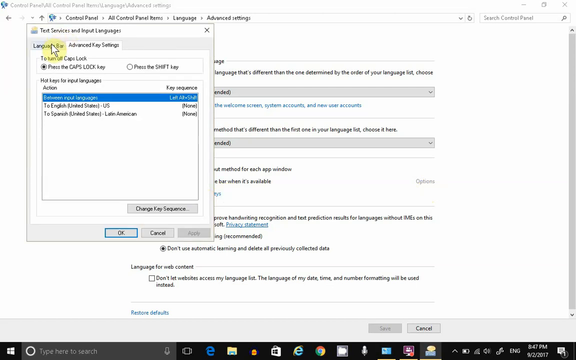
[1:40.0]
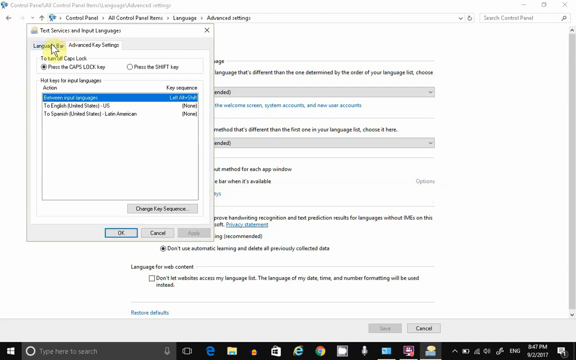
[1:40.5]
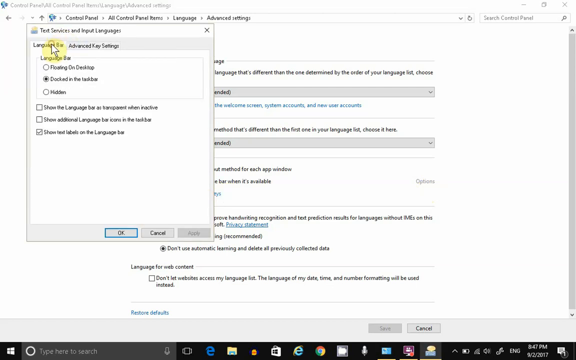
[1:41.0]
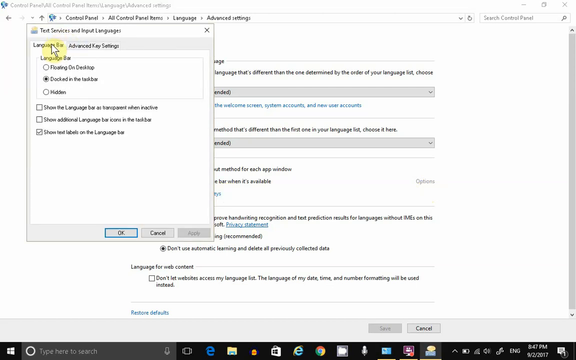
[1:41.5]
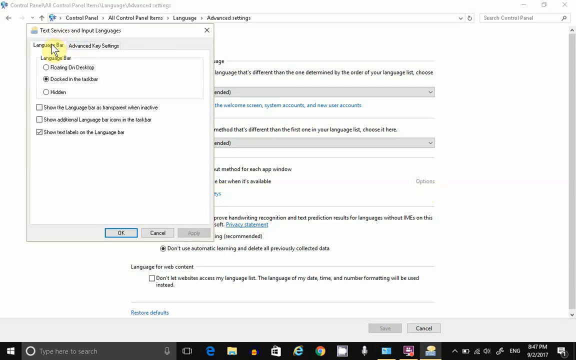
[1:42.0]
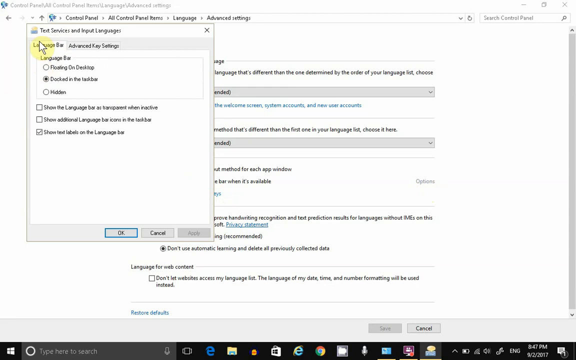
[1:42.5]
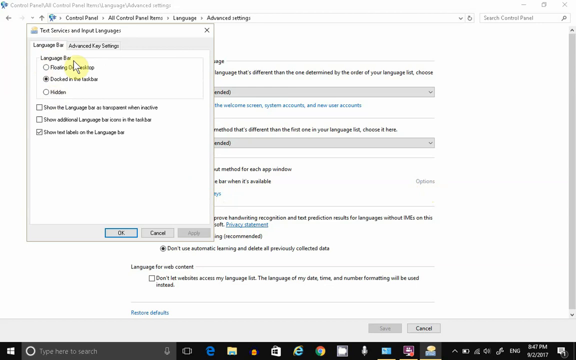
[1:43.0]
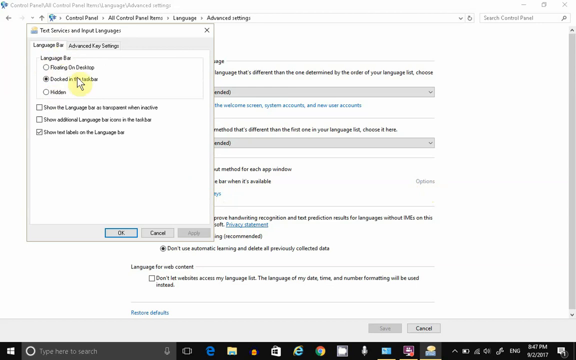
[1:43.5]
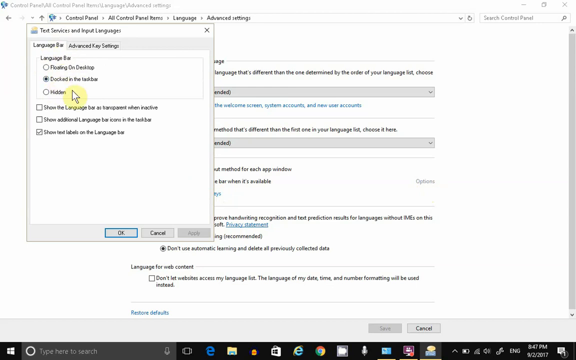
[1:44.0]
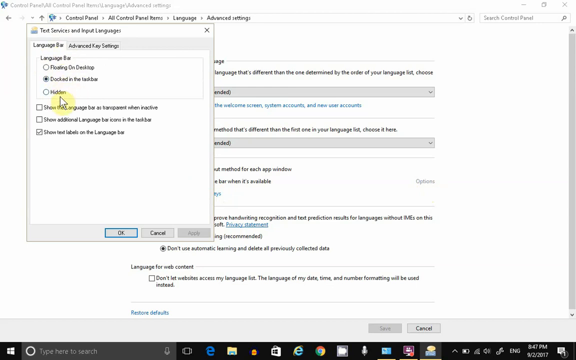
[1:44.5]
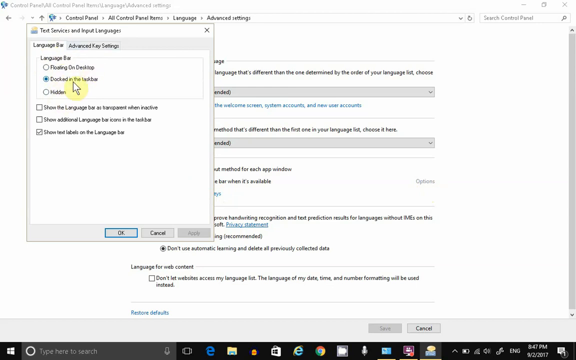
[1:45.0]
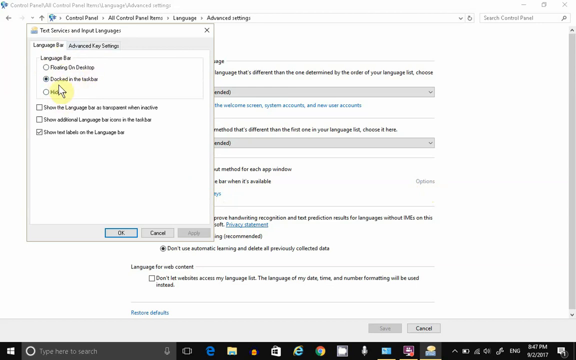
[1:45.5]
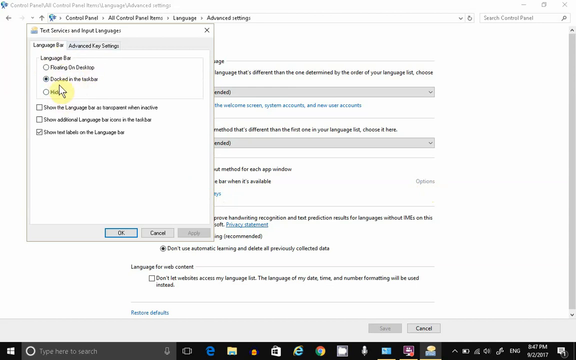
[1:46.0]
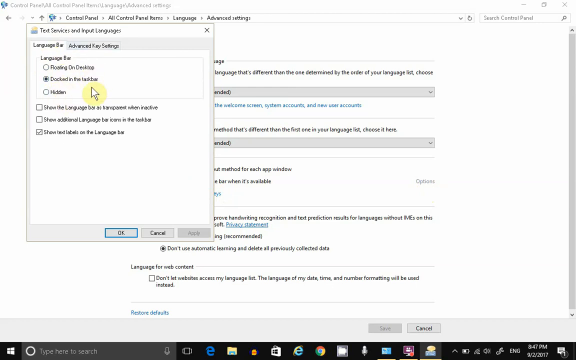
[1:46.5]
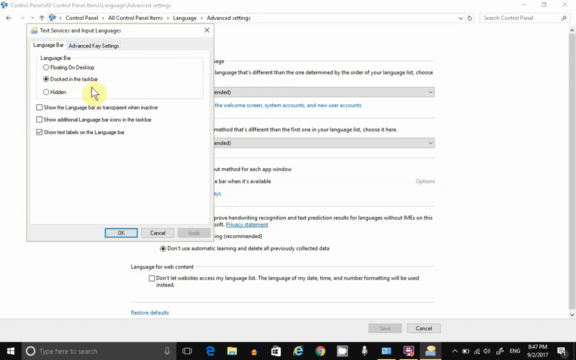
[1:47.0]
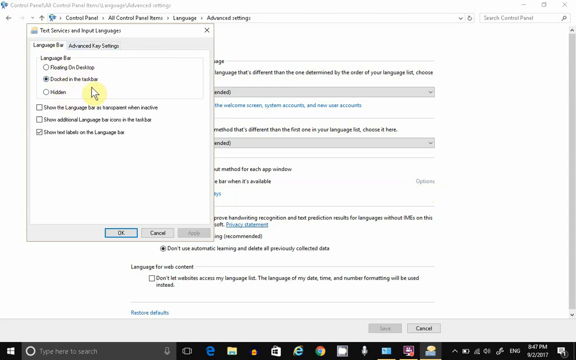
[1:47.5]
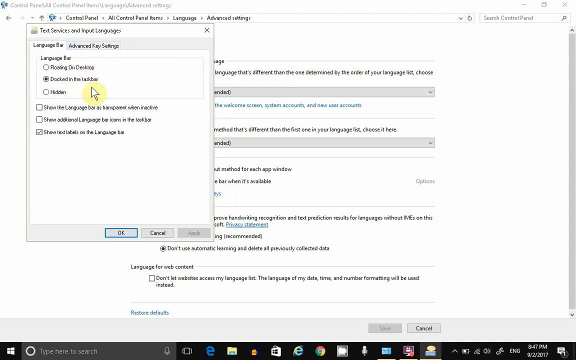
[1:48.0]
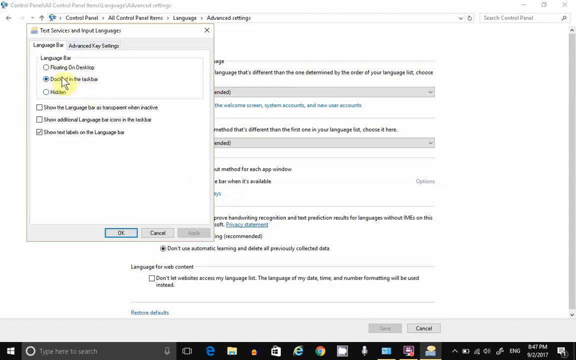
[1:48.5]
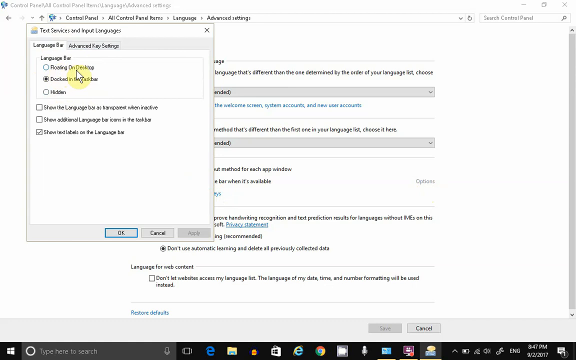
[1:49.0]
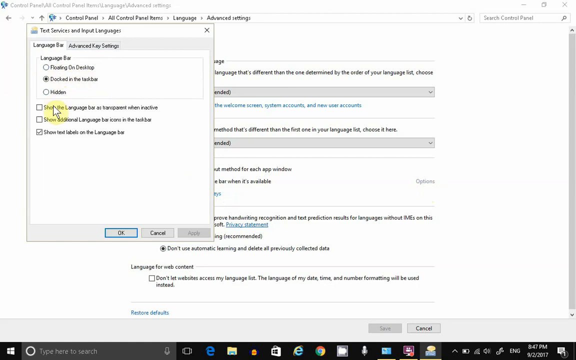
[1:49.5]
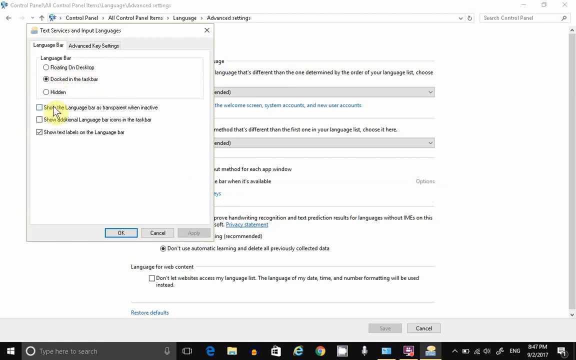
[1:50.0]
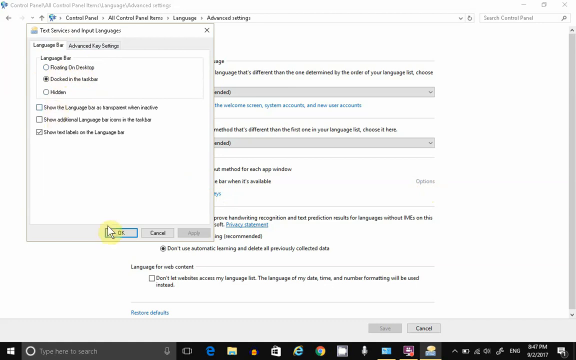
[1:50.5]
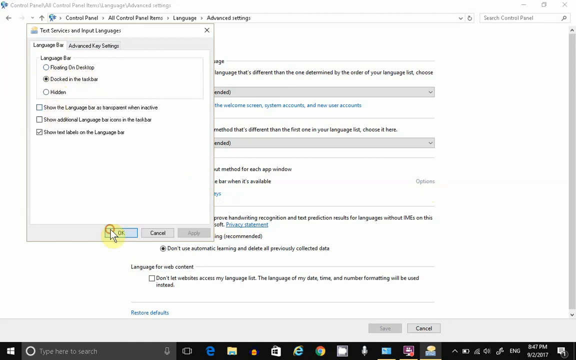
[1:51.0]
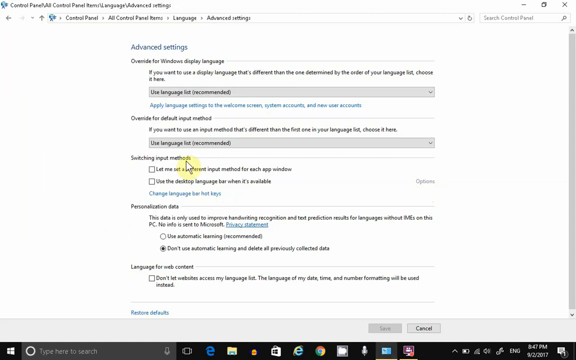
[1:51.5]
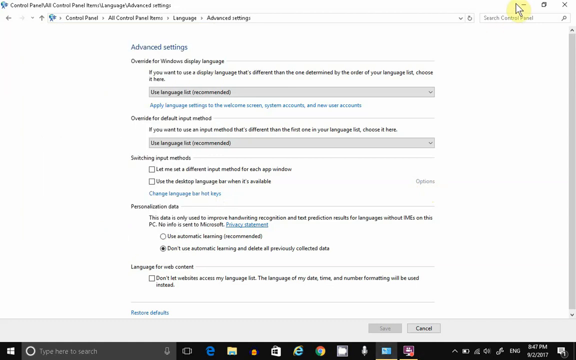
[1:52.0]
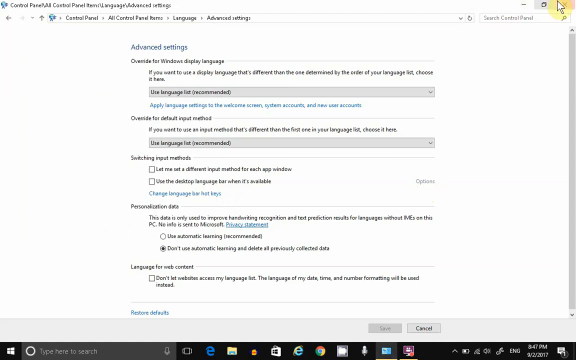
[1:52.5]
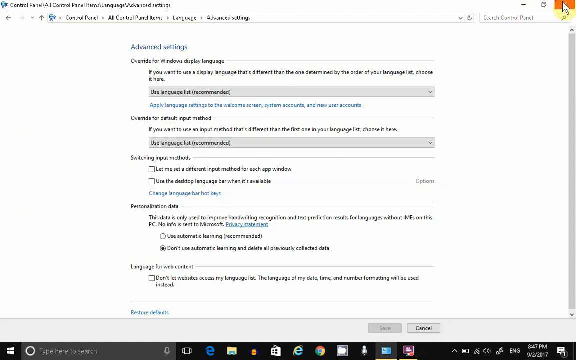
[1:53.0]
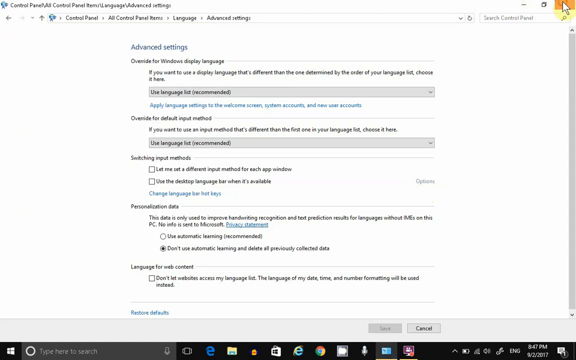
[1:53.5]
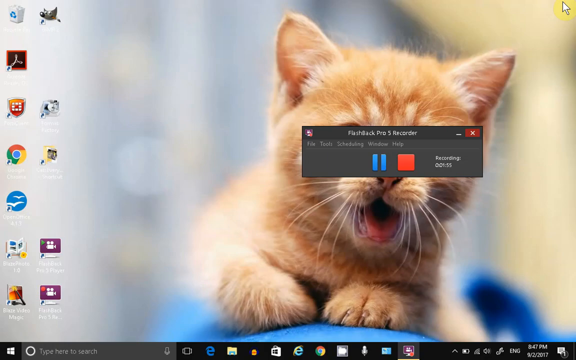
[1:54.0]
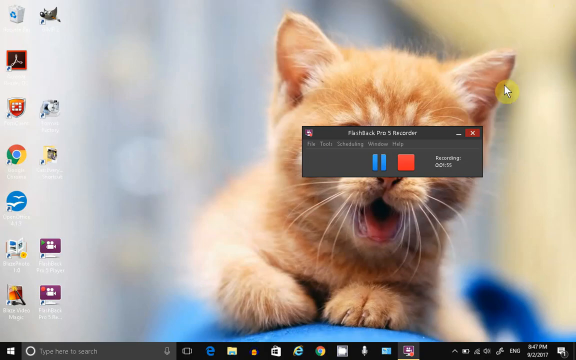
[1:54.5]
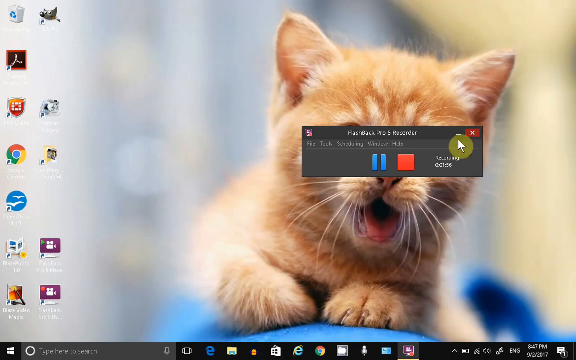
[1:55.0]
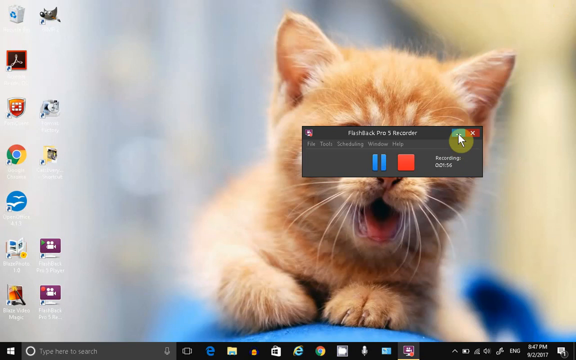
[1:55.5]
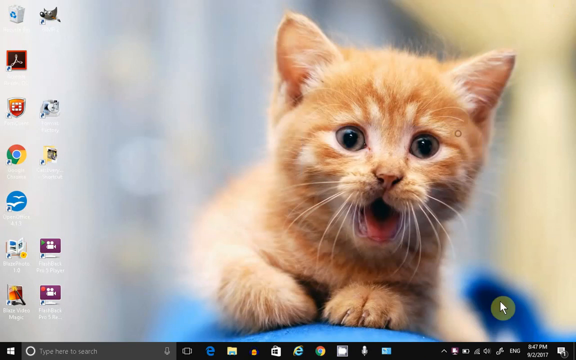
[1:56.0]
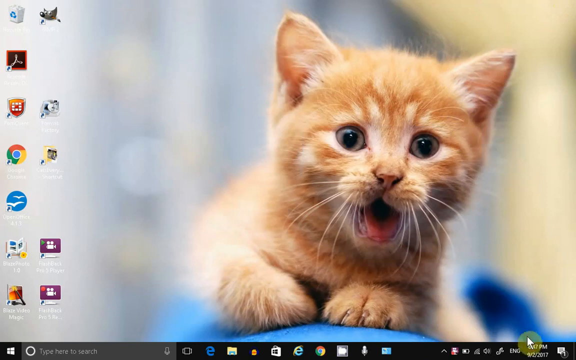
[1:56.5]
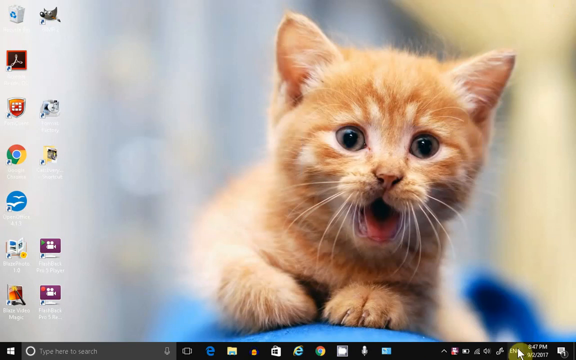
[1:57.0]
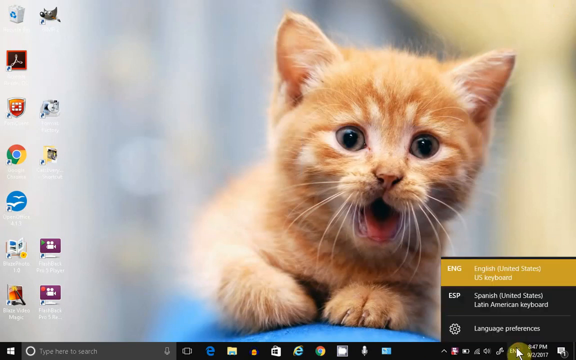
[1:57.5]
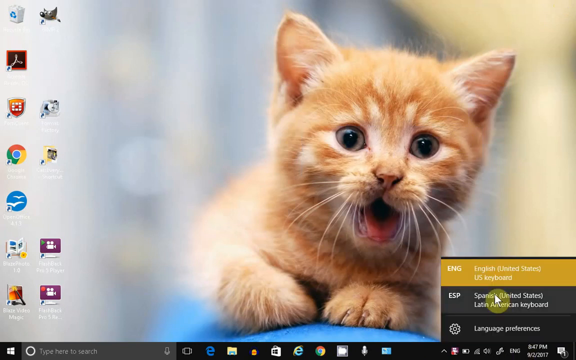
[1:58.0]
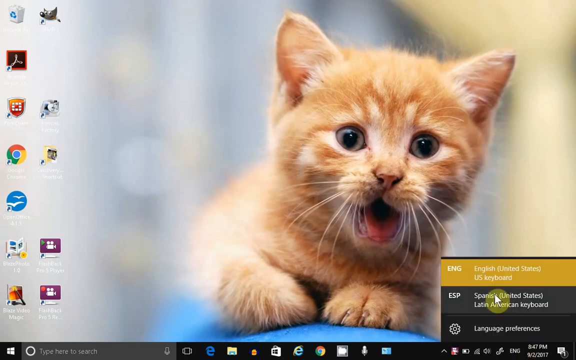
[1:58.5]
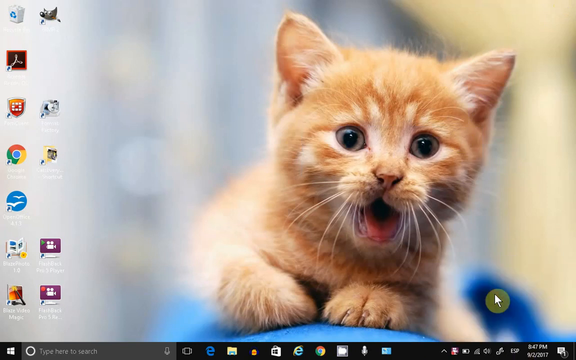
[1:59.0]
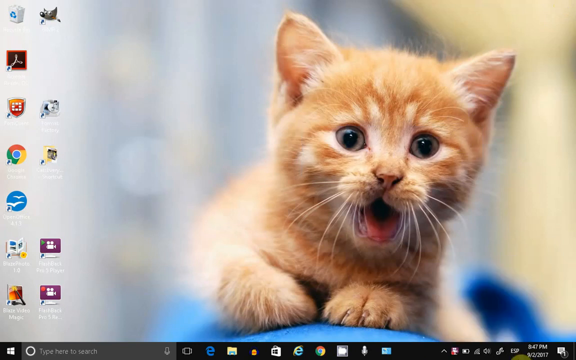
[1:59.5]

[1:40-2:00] A website about languages shows a language pop-up. Someone moves the cursor, which is surrounded by yellow, around and around indecisively. They click an orange button in the upper right-hand corner of the computer, and the screensaver appears: a red tabby cat pictured by itself, leaning on something, with its front paws visible and its mouth open as if meowing. The cursor then goes to the top, and a pop-up appears in the left-hand corner. The cursor clicks on language and keeps moving around in circles, going slightly under sentences and following along.